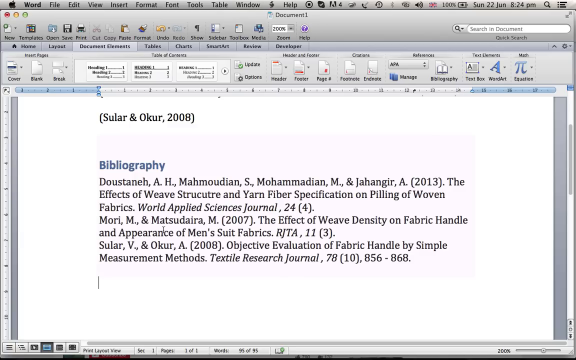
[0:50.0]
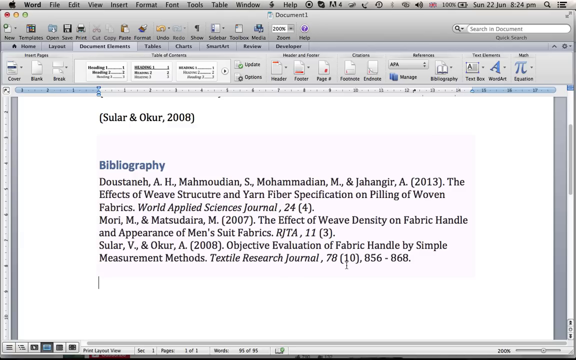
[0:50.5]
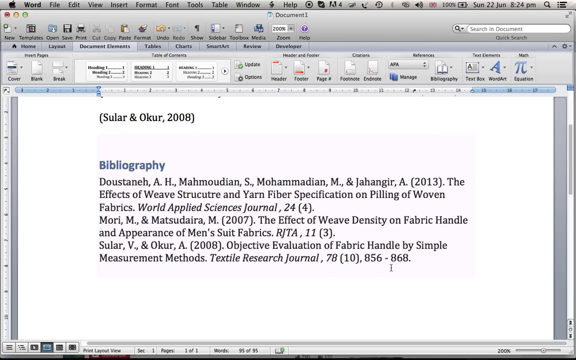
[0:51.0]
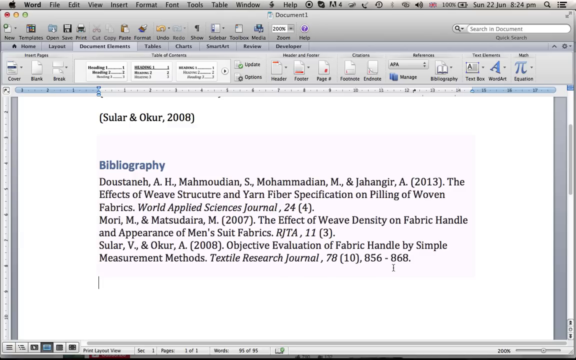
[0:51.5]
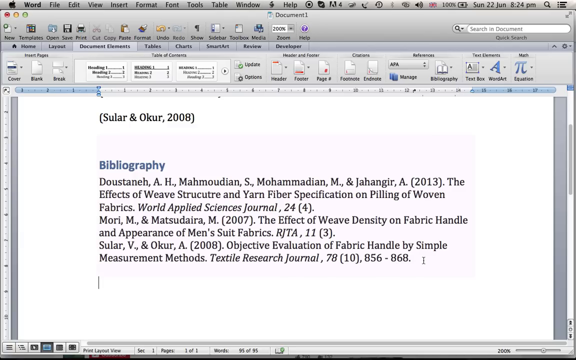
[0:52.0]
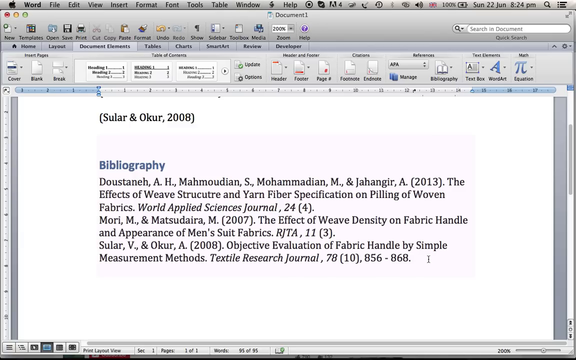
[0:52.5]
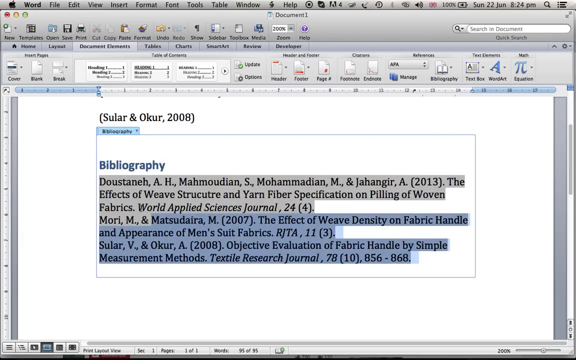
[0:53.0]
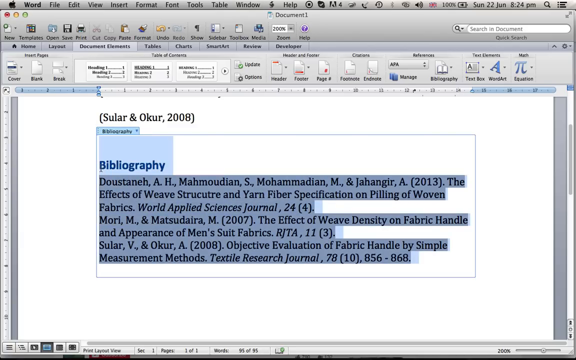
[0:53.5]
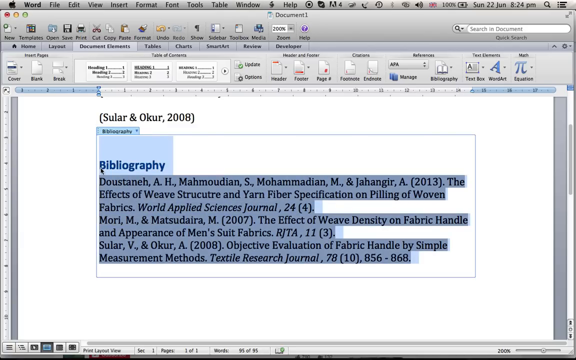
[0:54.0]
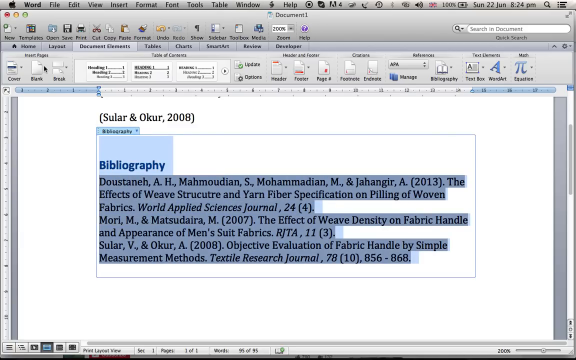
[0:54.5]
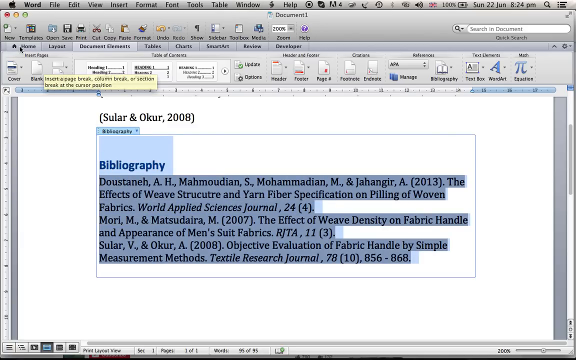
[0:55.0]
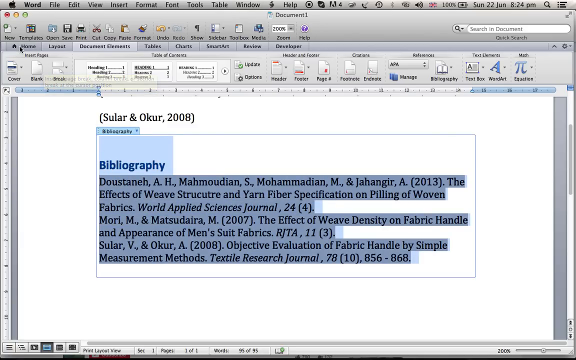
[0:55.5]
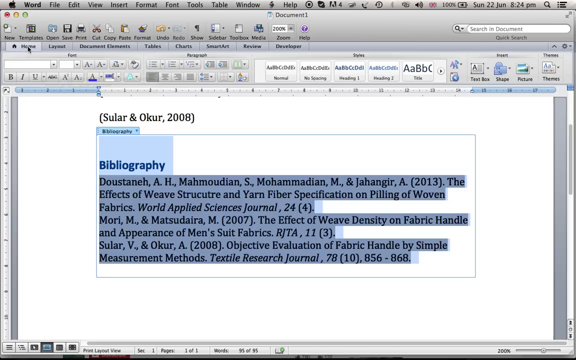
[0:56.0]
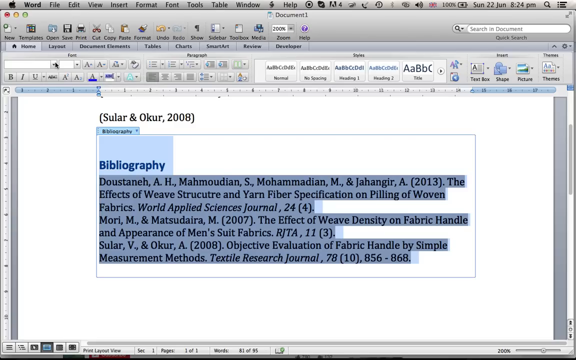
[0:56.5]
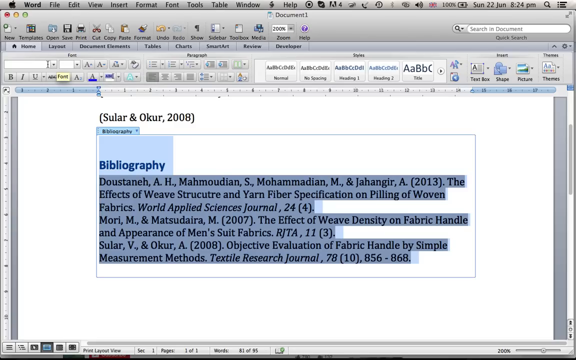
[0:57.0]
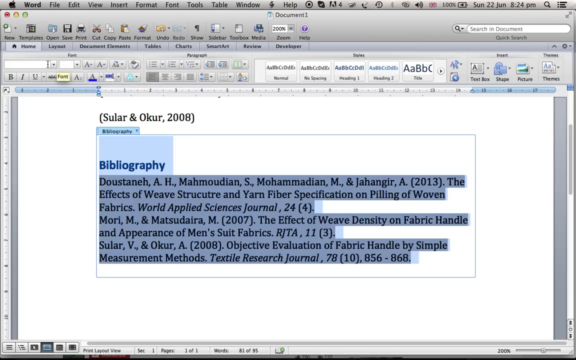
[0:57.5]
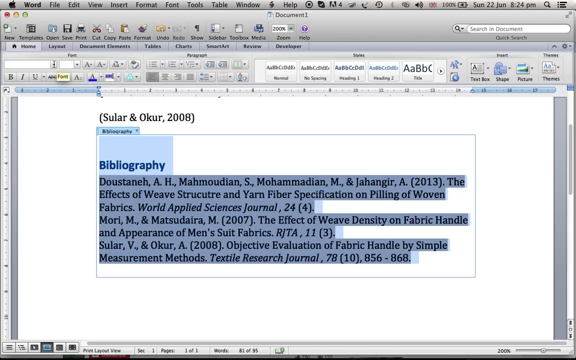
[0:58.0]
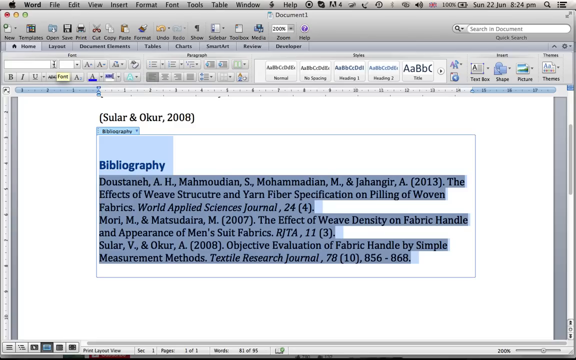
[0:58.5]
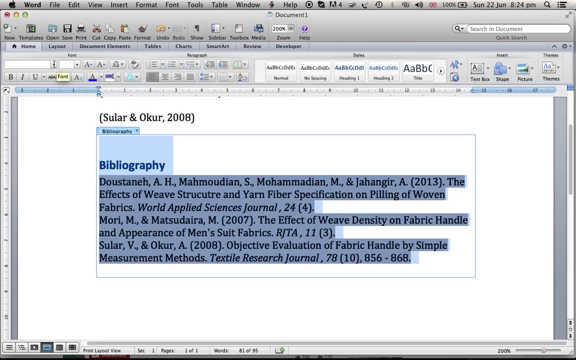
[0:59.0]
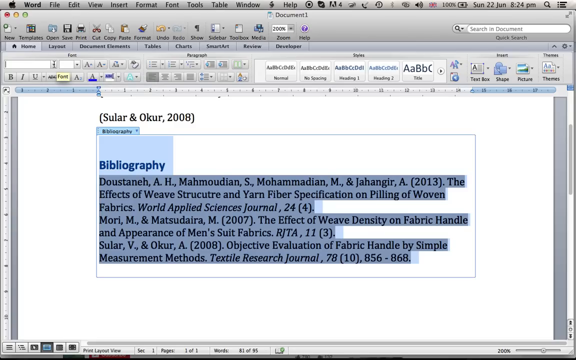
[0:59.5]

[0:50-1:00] The cursor moves, and the person highlights the whole bibliography so it turns blue. The person then presses the Home button and goes to the Font button, but the font type and size being used are not yet shown.